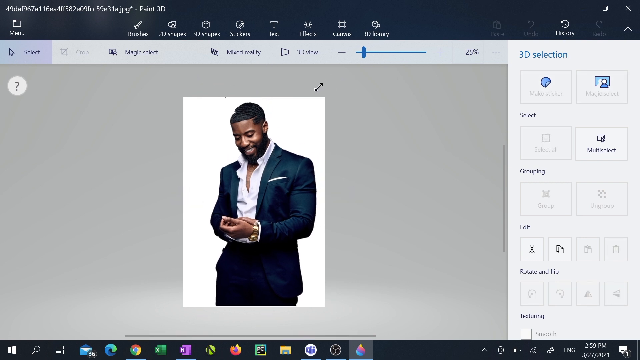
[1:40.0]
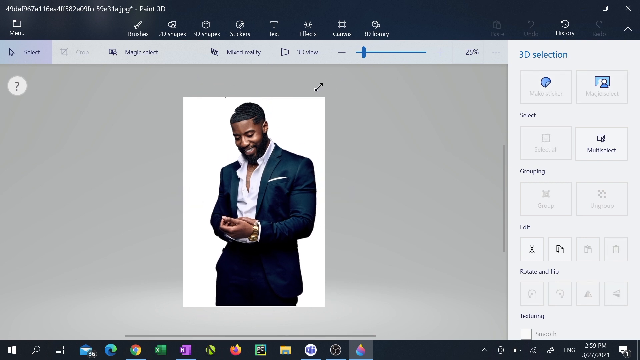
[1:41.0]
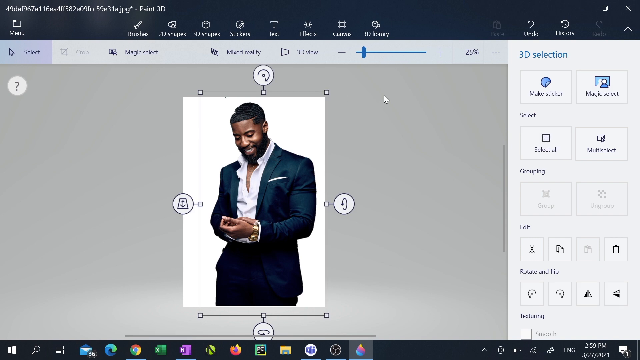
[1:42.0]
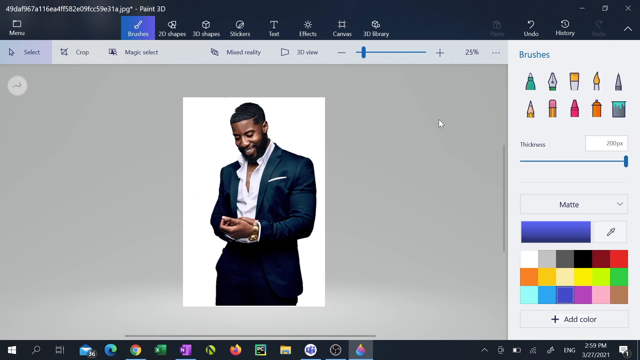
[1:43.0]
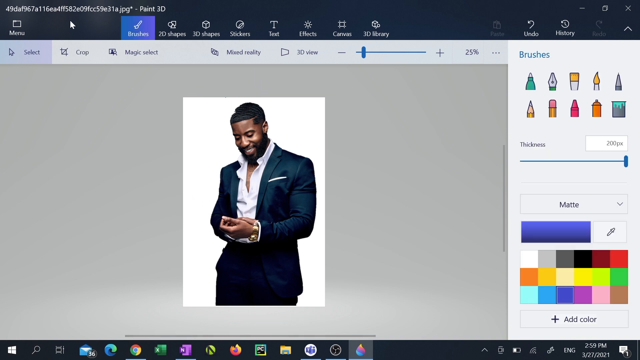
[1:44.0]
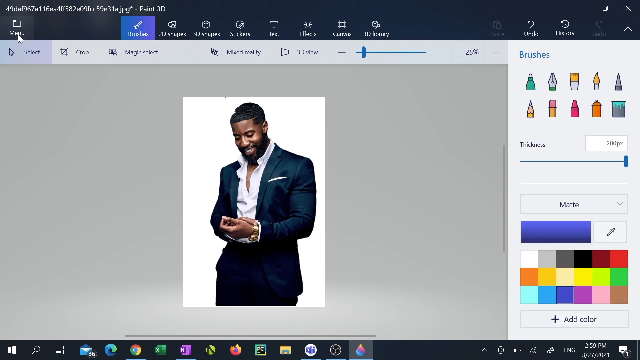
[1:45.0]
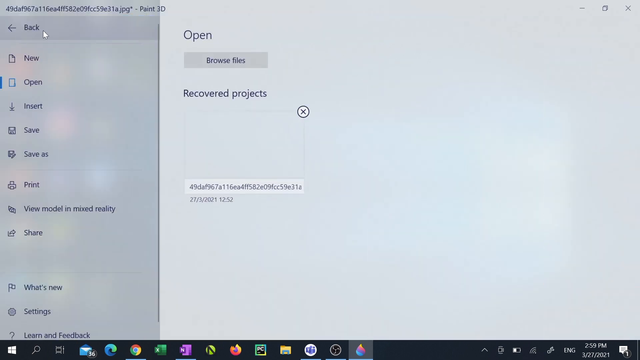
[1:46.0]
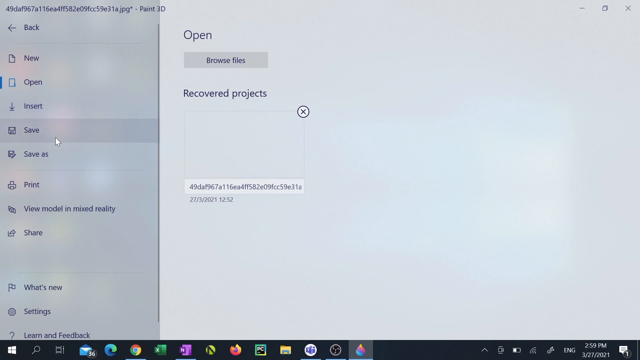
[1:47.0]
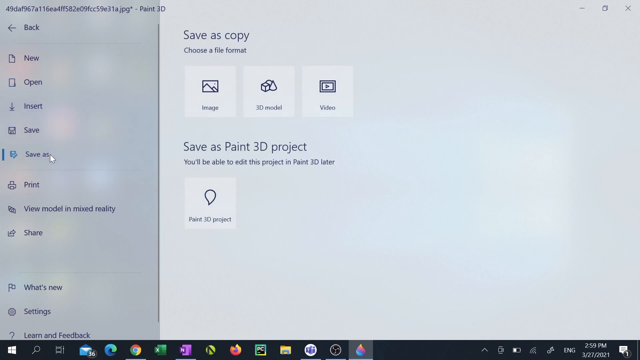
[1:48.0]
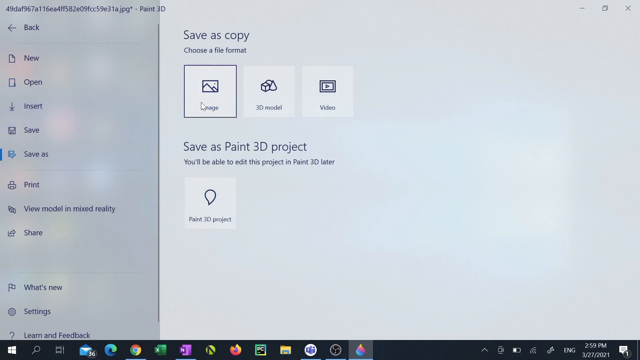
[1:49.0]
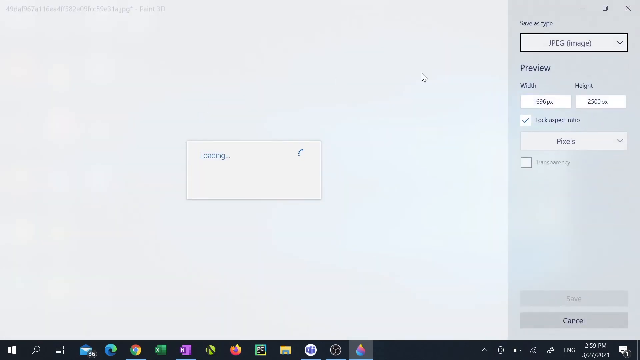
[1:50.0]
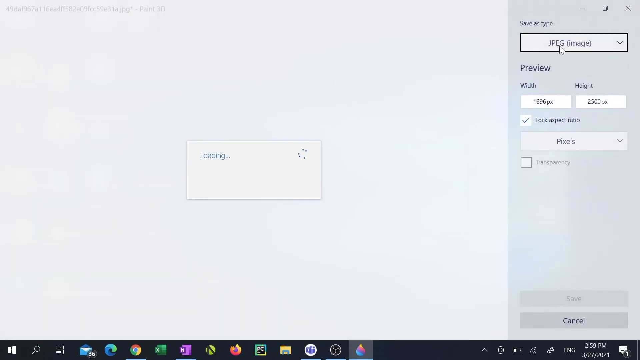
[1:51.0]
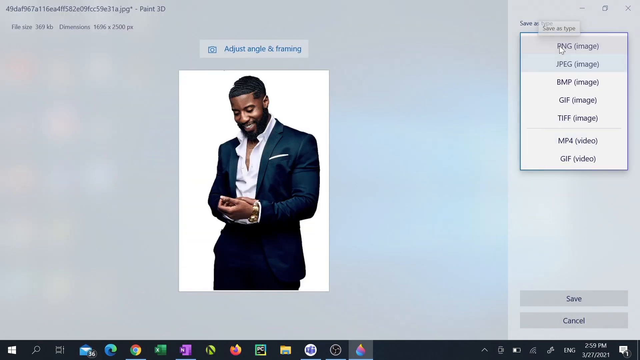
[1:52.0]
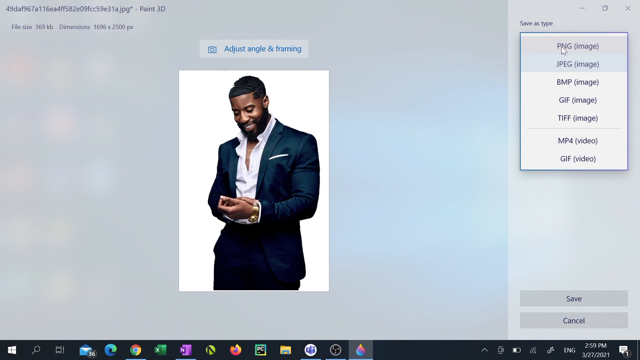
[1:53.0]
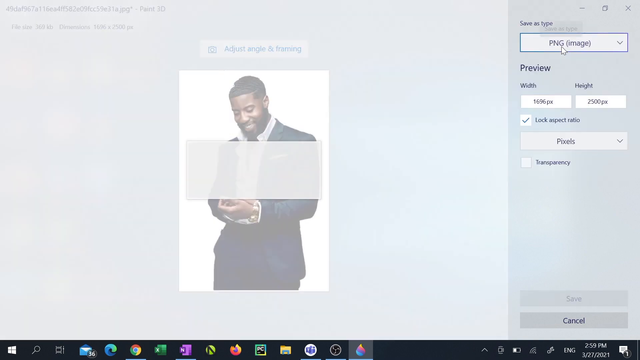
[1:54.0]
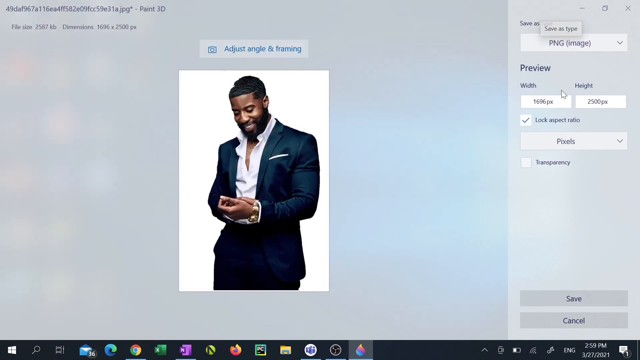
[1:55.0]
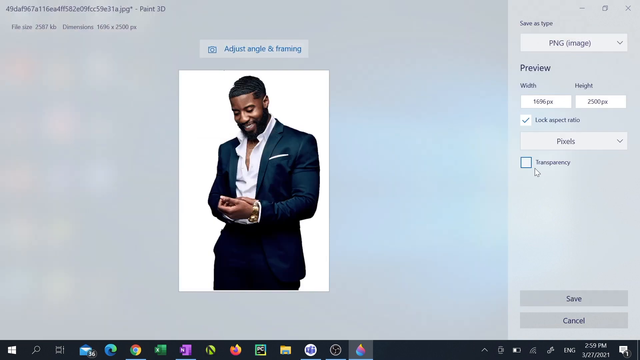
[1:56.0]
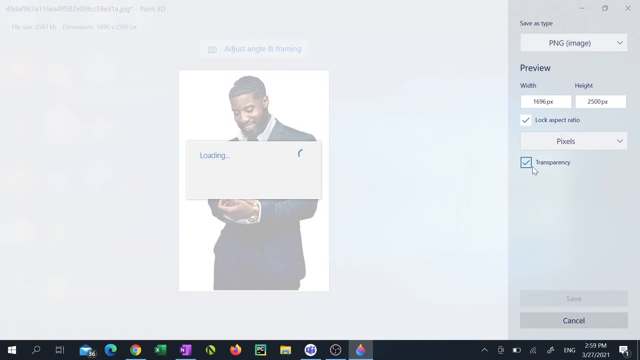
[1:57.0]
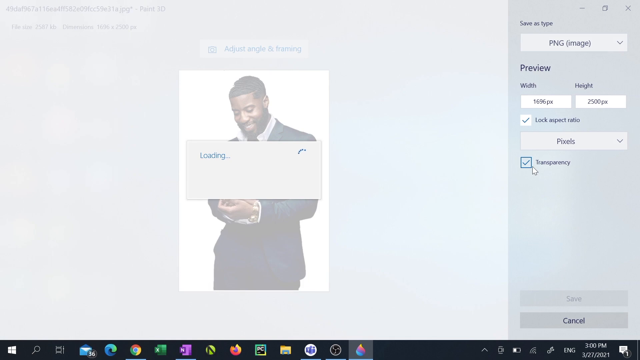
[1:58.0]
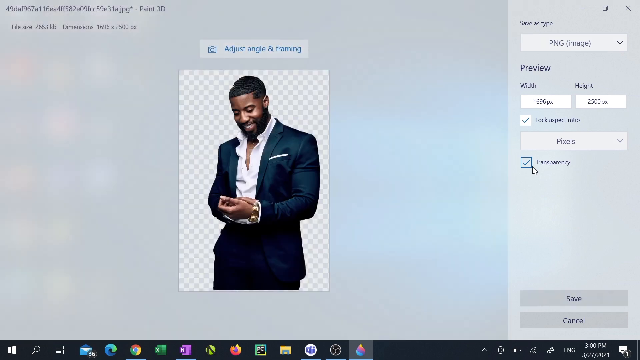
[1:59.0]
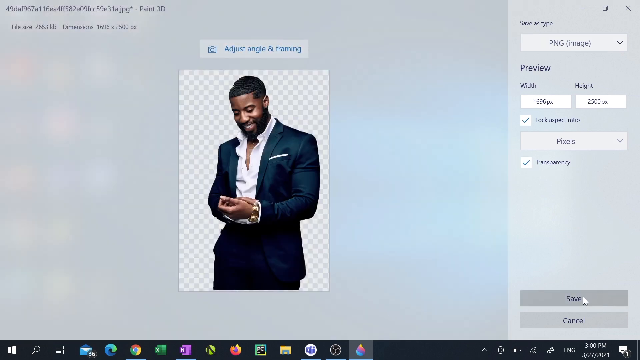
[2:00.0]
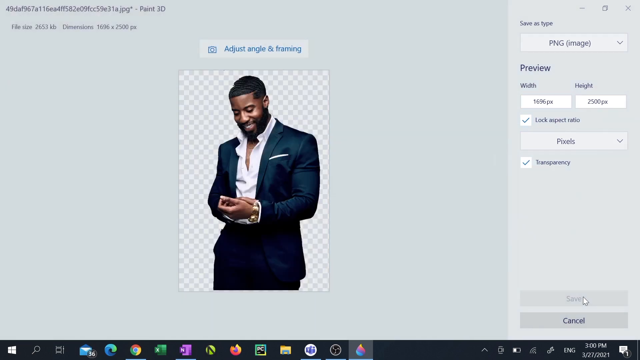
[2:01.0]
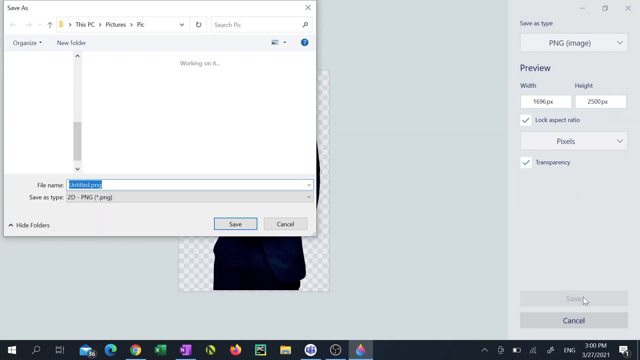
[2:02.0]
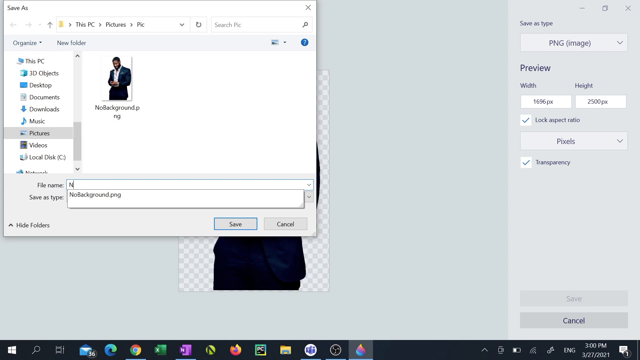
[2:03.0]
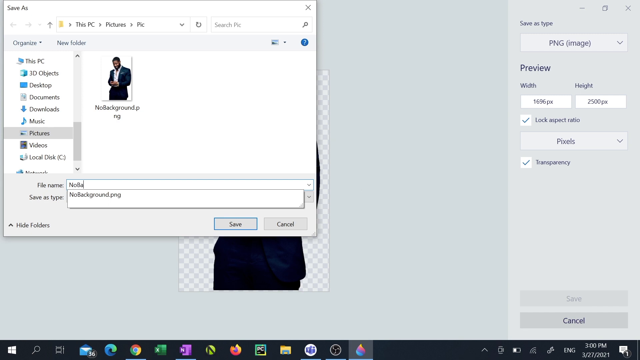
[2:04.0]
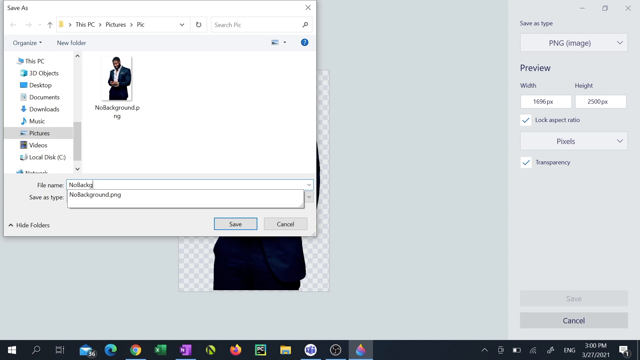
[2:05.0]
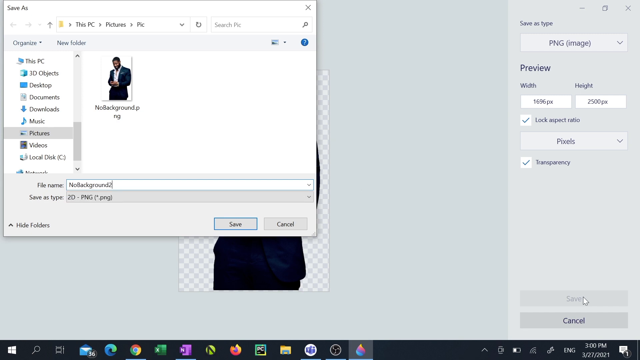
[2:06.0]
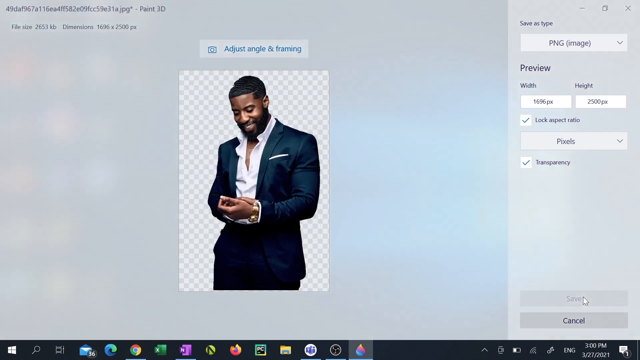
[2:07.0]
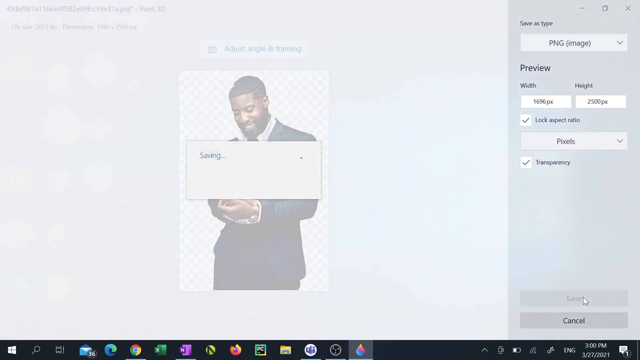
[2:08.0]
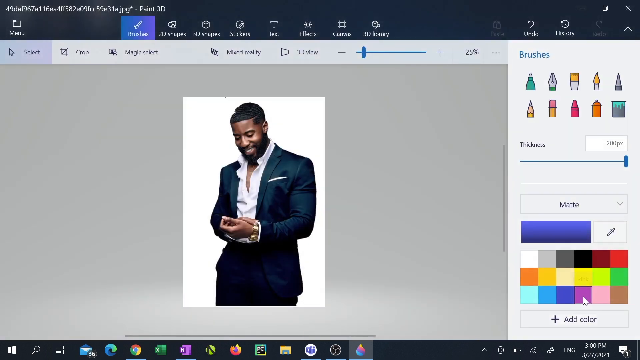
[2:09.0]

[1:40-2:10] The image of the man in the blue suit with the white shirt is now on a white background. The user moves the mouse to the top left corner of the screen and clicks menu, save as, image. They click on JPEG and change it to PNG format. They select the transparency button, which changes the background from white to transparent, signified by checkered boxes, and then click save at the bottom right corner of the screen. A save as box comes up with the file name "untitled.png", which the user changes to "no background" before saving. The whole process takes roughly 20 seconds.